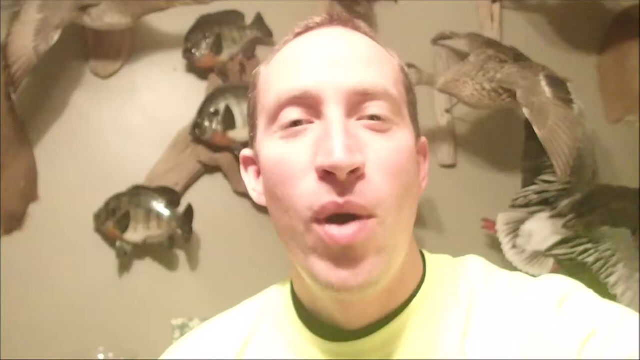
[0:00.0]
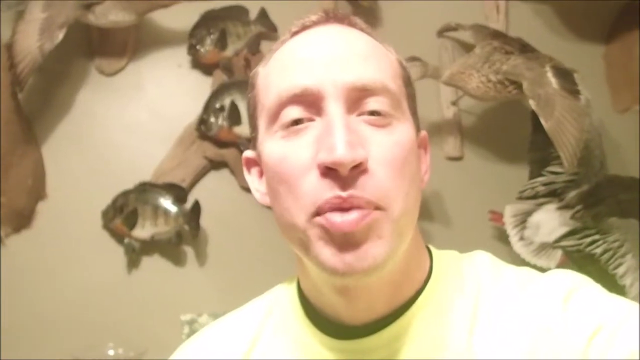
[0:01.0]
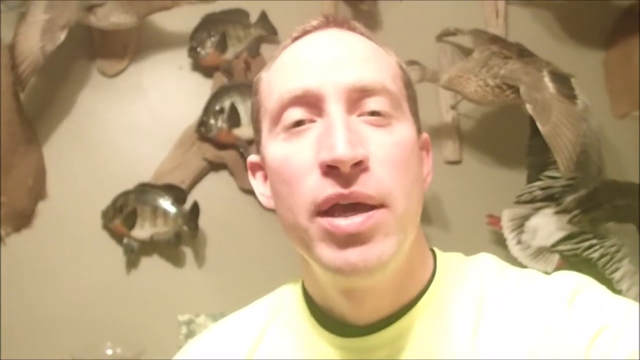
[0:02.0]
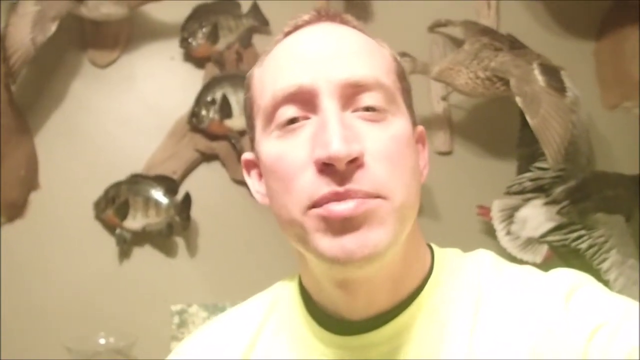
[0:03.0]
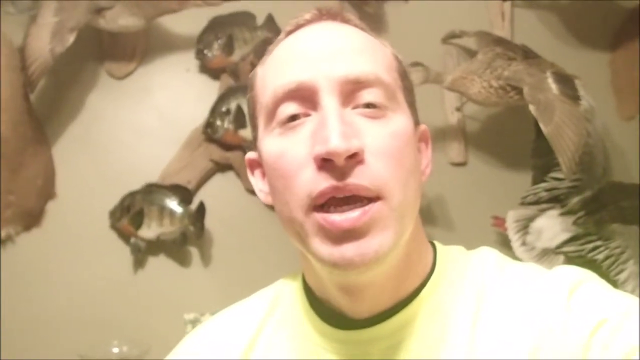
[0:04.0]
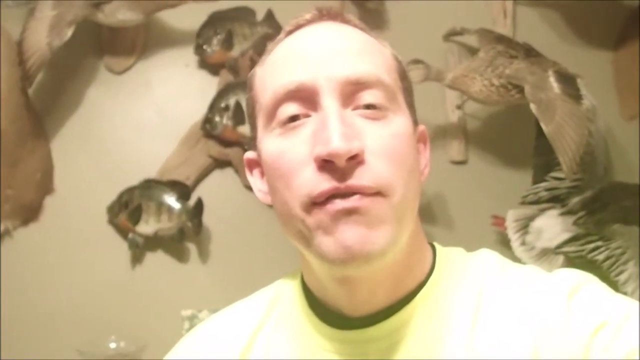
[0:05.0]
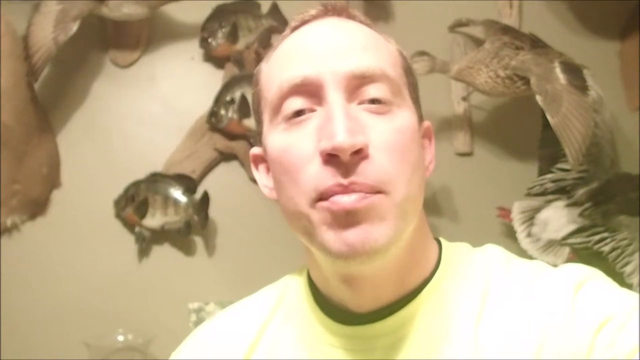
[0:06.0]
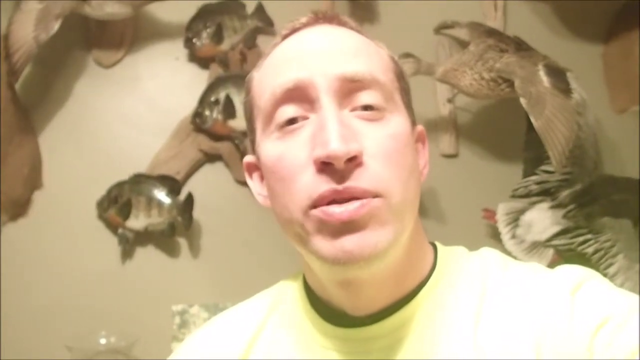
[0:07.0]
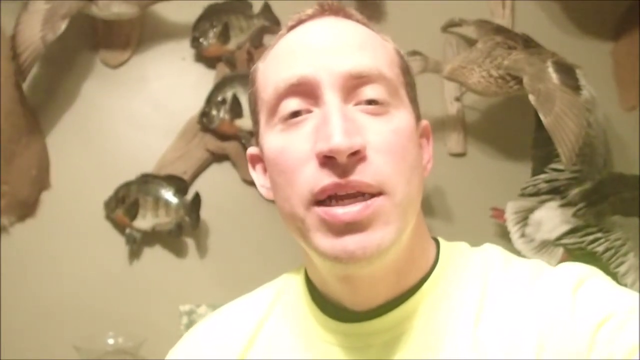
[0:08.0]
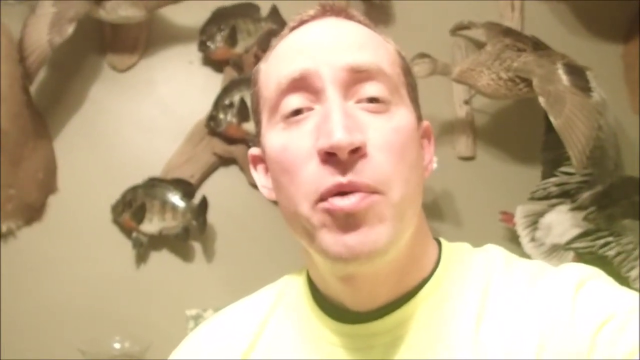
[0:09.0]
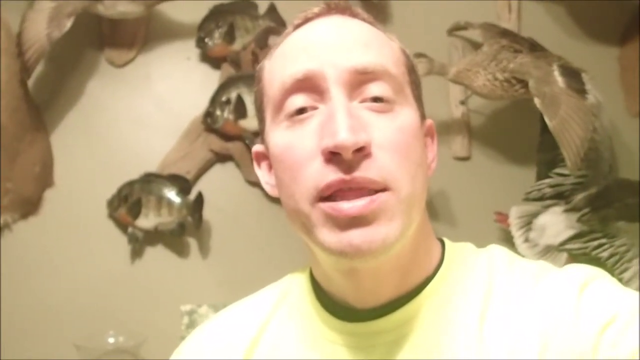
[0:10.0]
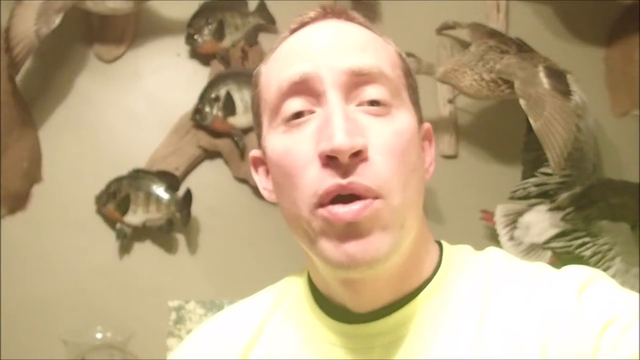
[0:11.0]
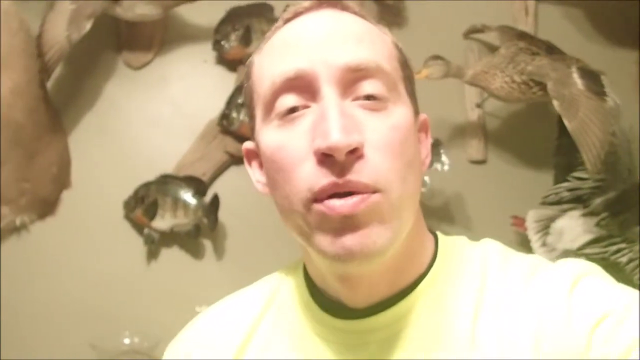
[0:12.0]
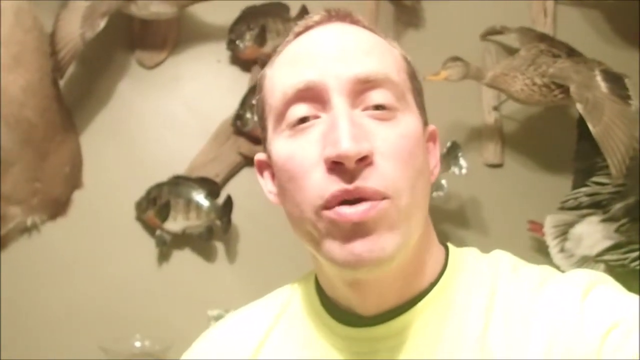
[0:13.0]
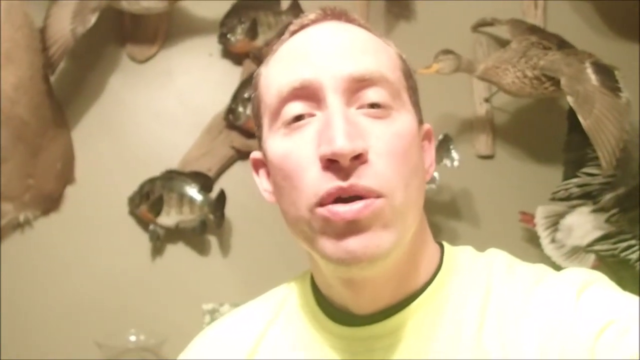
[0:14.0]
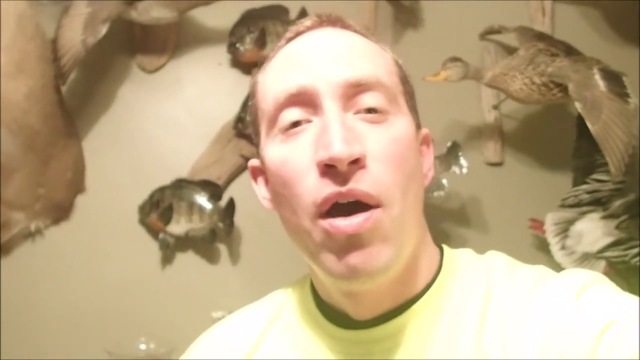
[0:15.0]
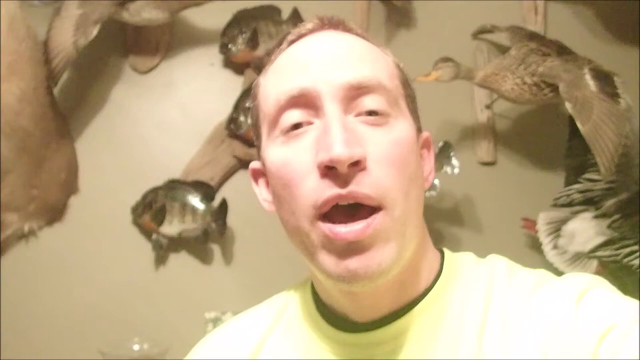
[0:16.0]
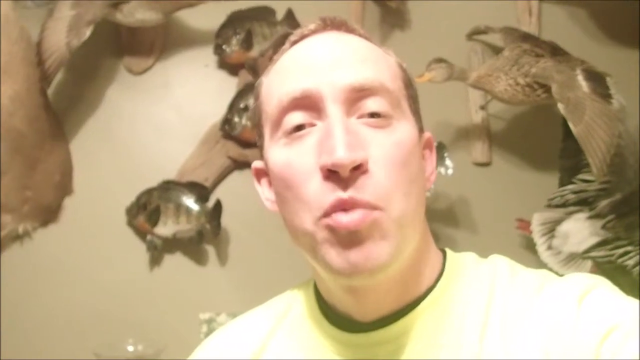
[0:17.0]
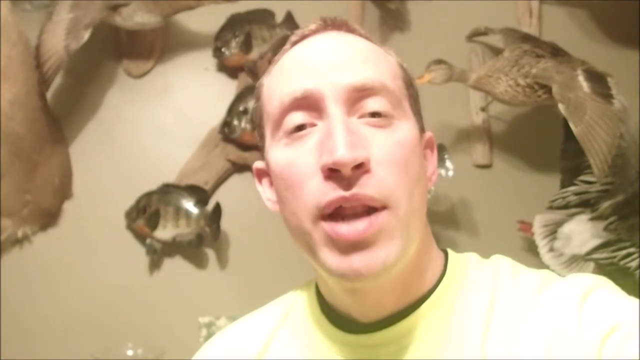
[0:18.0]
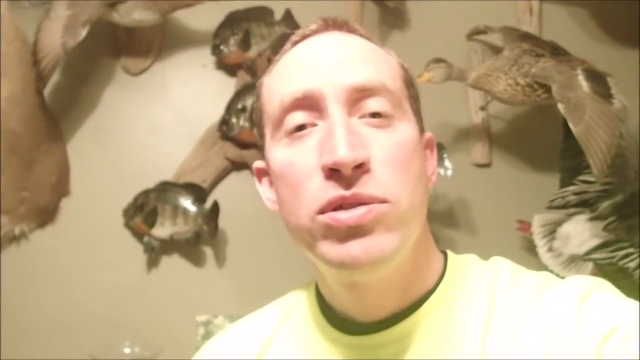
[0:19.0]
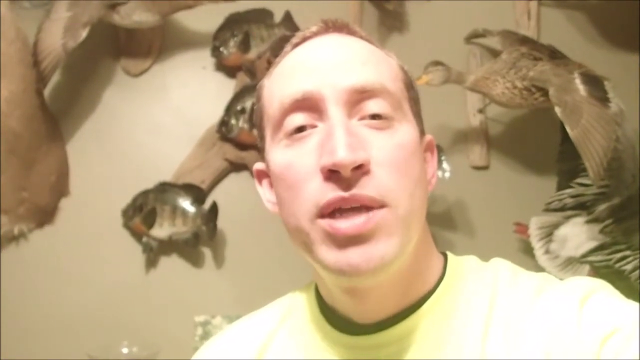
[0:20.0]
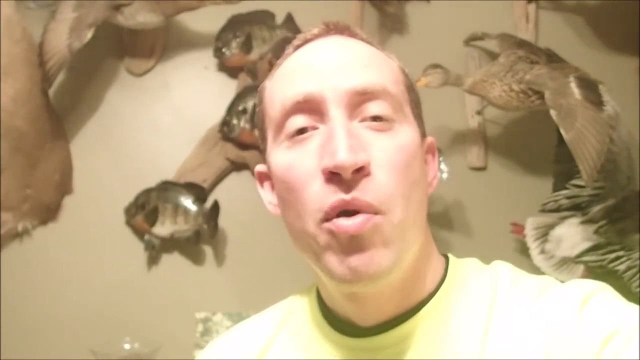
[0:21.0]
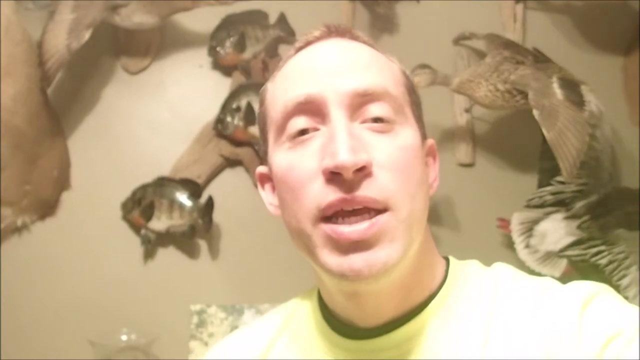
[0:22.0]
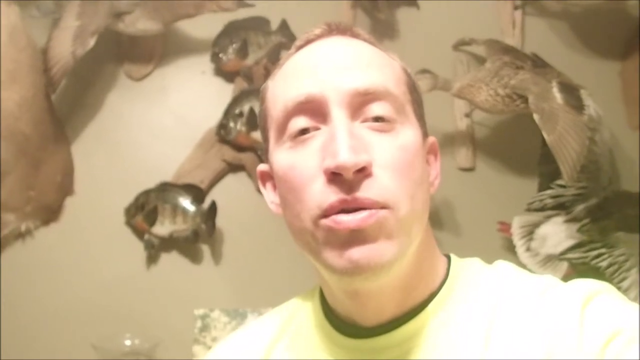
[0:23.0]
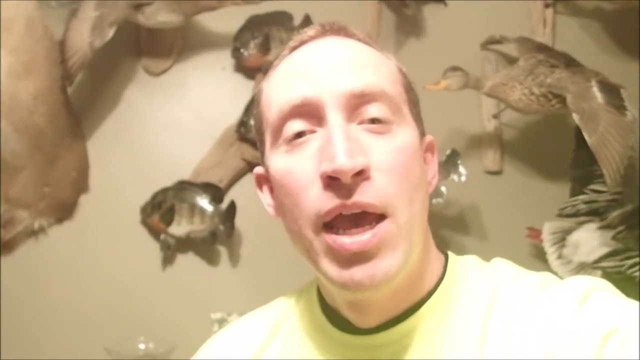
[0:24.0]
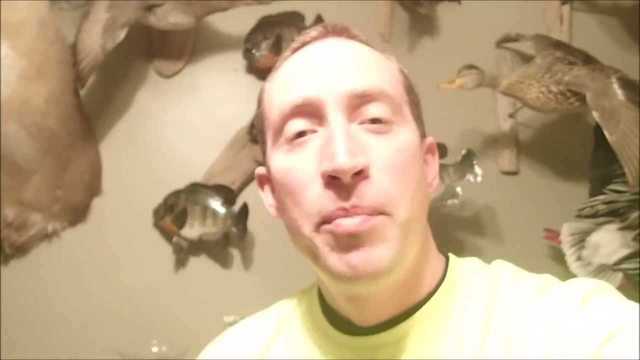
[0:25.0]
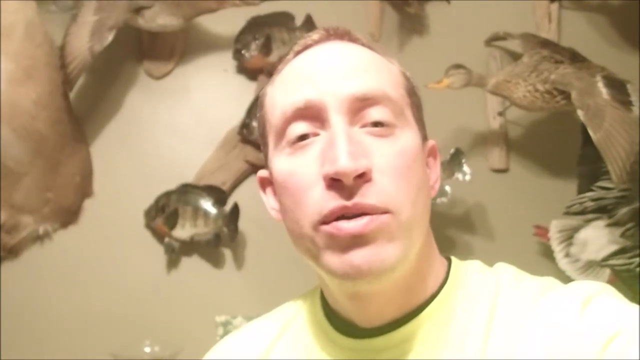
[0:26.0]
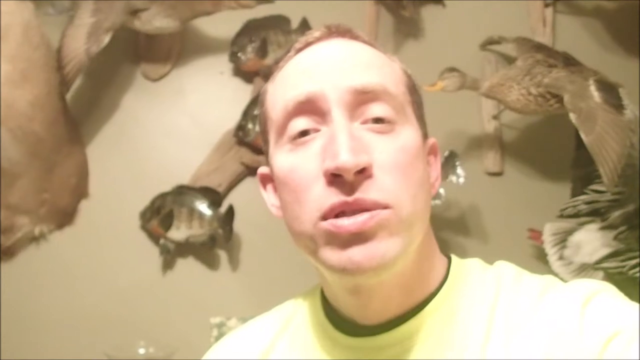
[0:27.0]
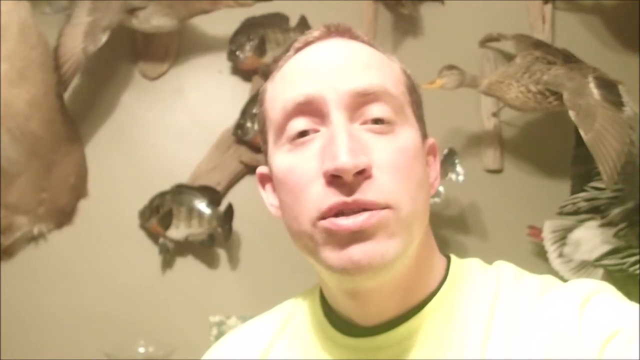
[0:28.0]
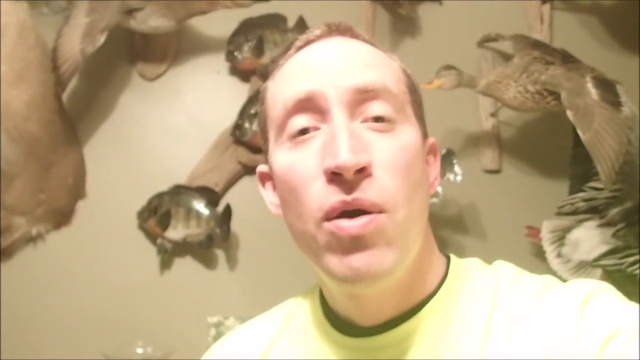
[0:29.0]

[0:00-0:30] A man is shown and then talks directly to the camera. Behind him, the wall is decorated with what seem to be portraits of fish and of a bird; these portraits seem artificial and do not look real.